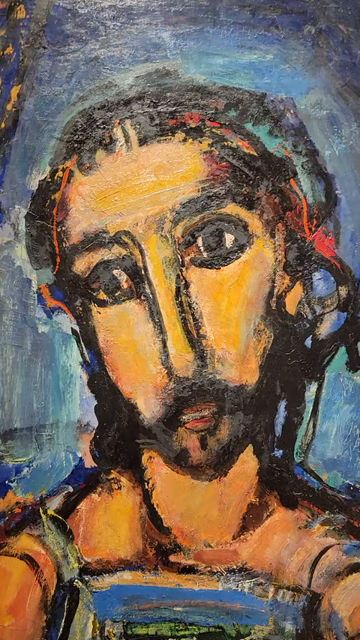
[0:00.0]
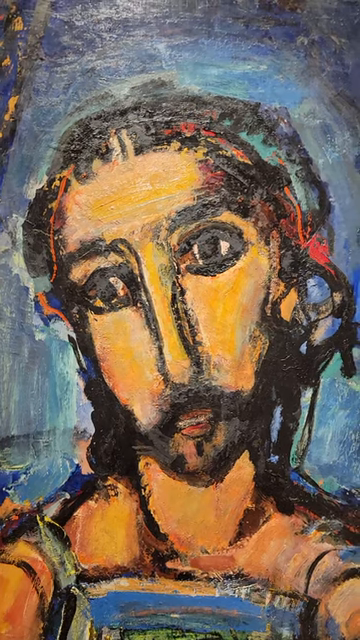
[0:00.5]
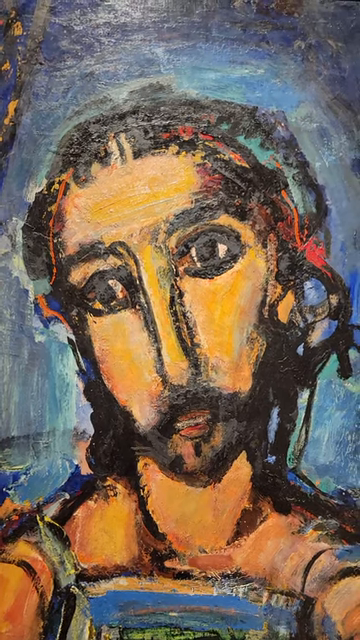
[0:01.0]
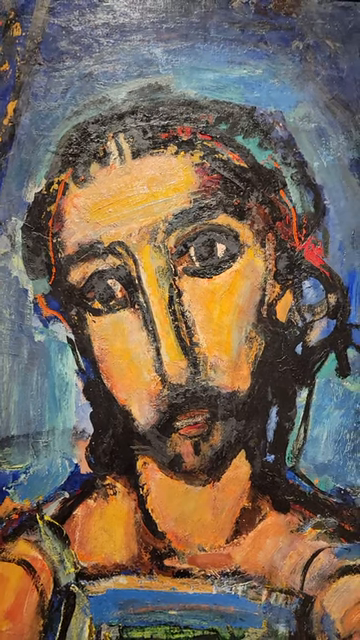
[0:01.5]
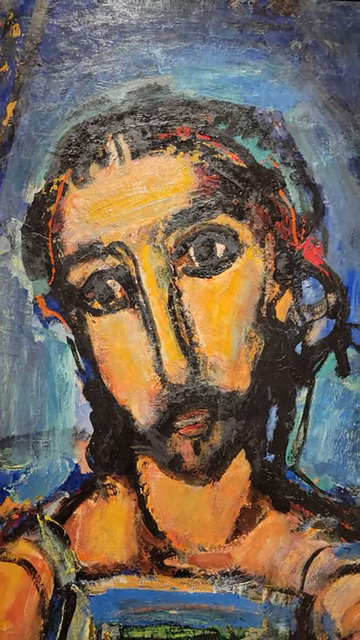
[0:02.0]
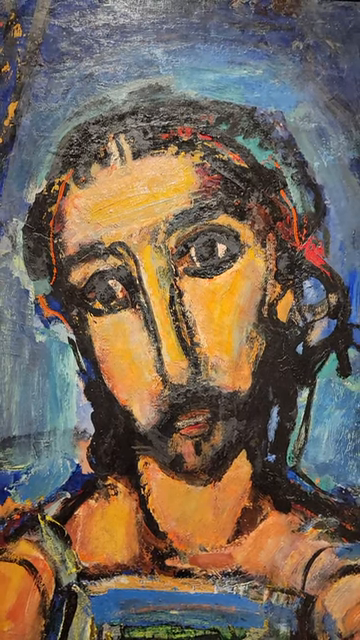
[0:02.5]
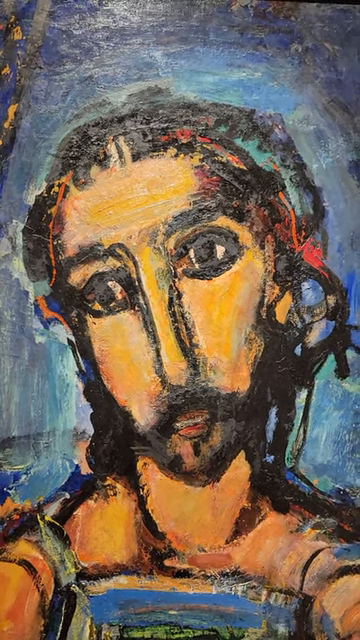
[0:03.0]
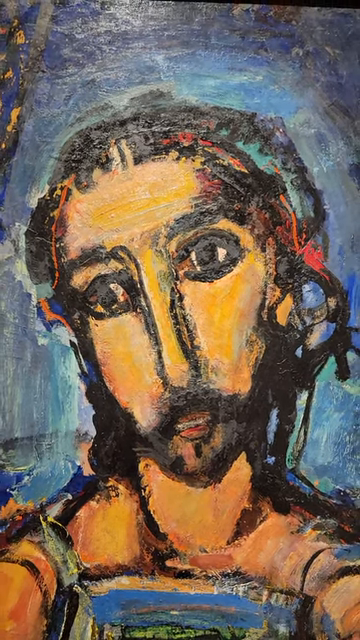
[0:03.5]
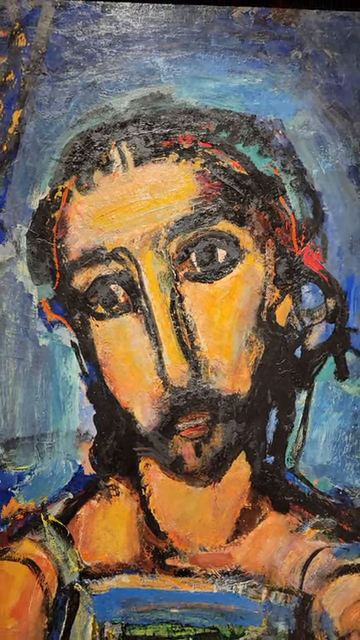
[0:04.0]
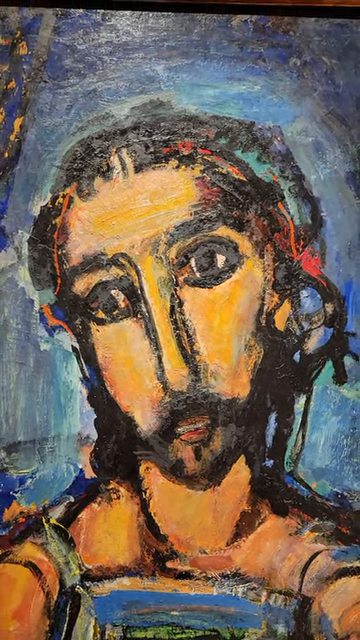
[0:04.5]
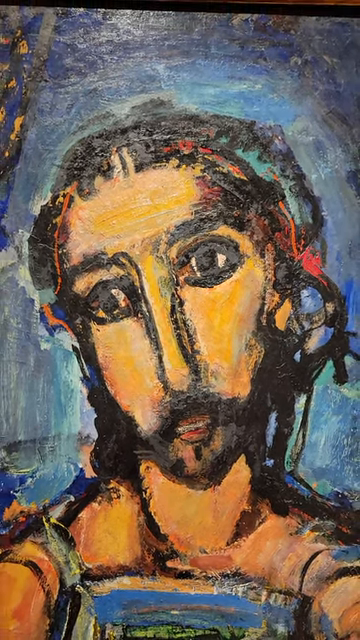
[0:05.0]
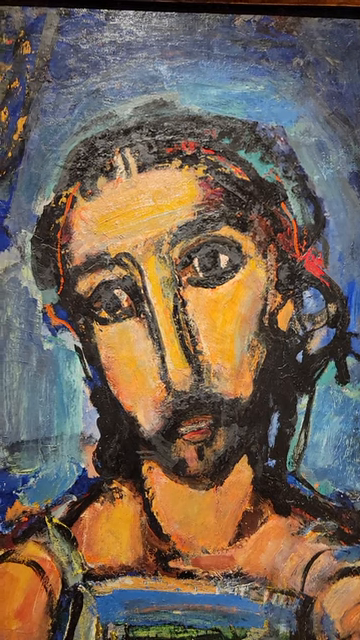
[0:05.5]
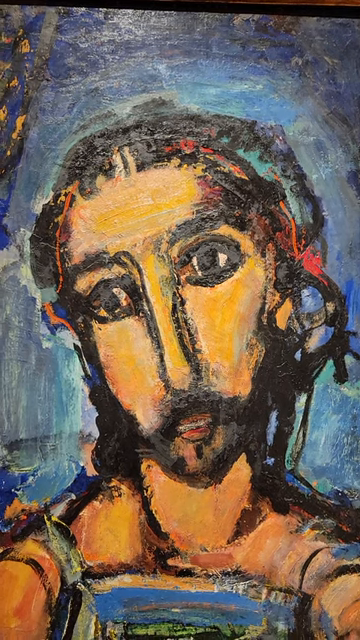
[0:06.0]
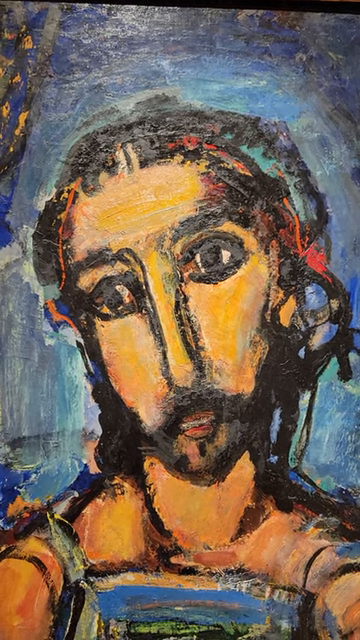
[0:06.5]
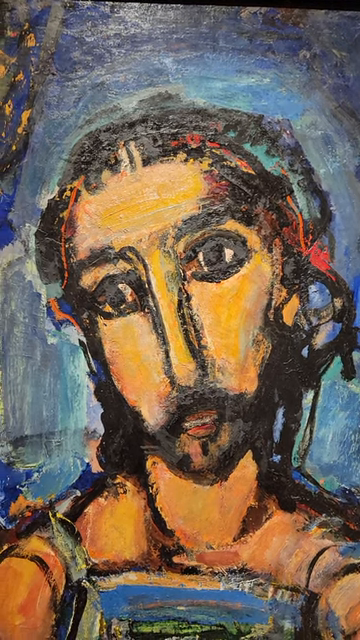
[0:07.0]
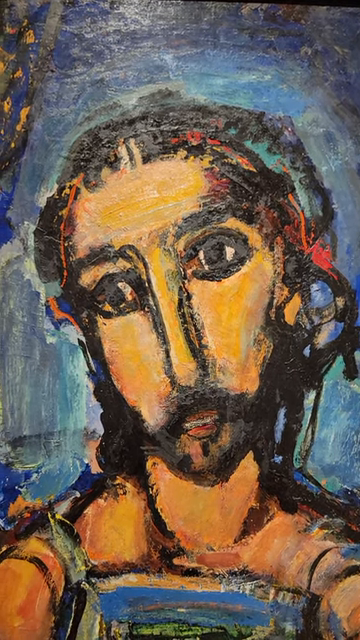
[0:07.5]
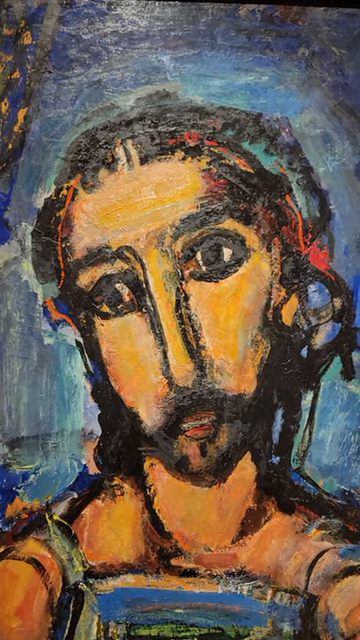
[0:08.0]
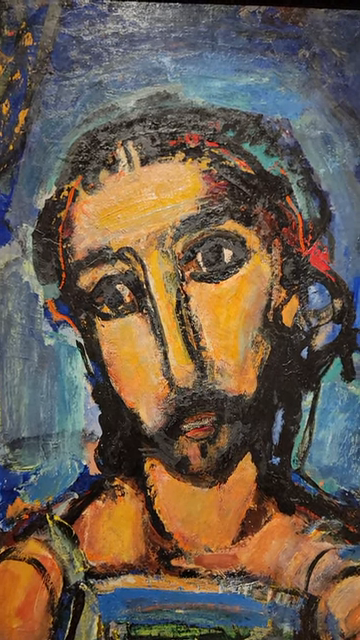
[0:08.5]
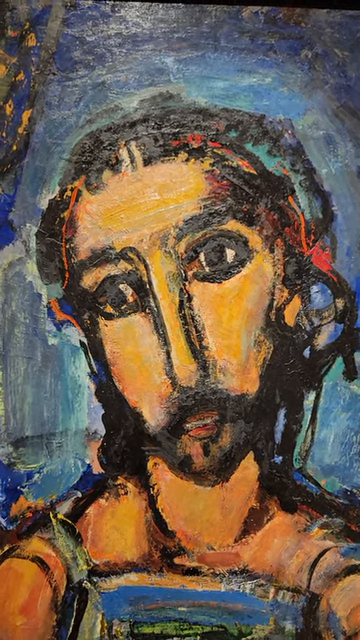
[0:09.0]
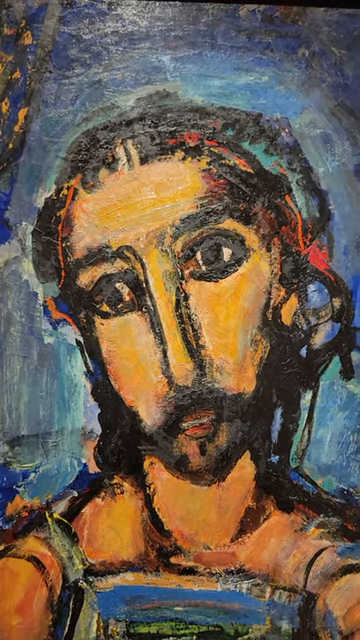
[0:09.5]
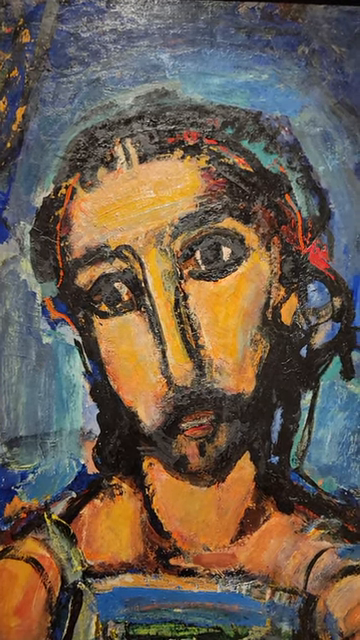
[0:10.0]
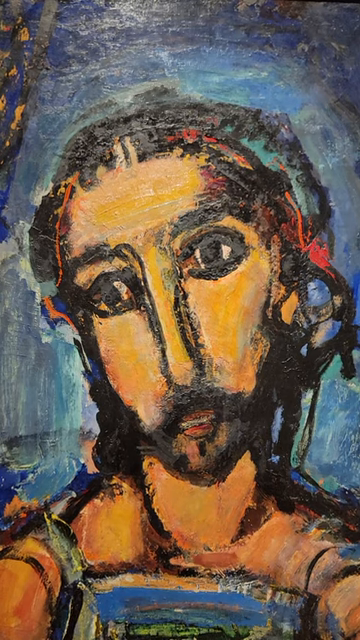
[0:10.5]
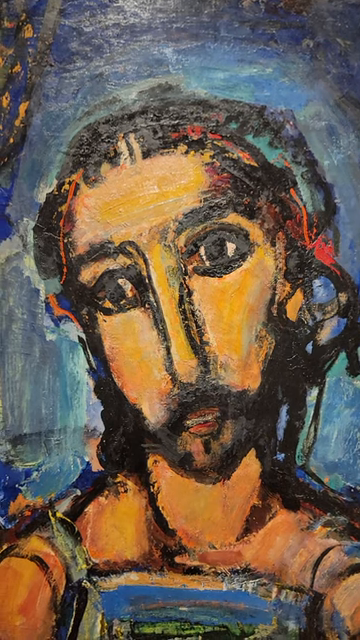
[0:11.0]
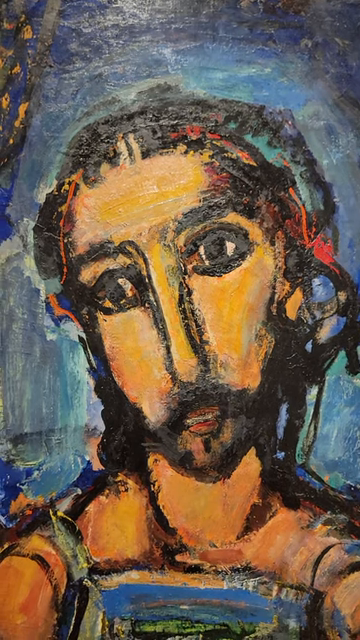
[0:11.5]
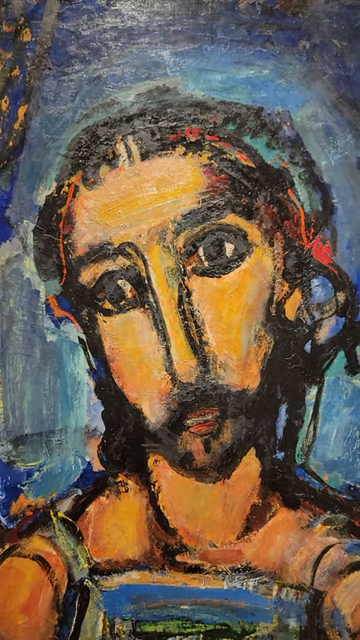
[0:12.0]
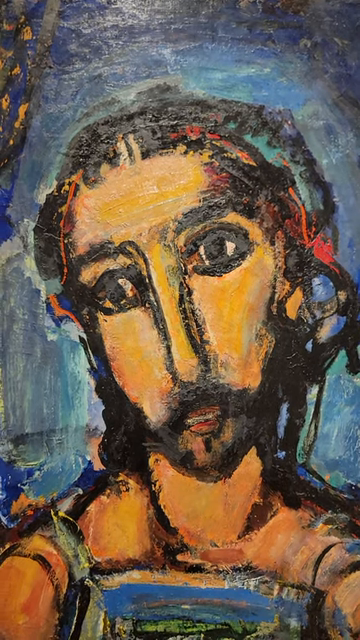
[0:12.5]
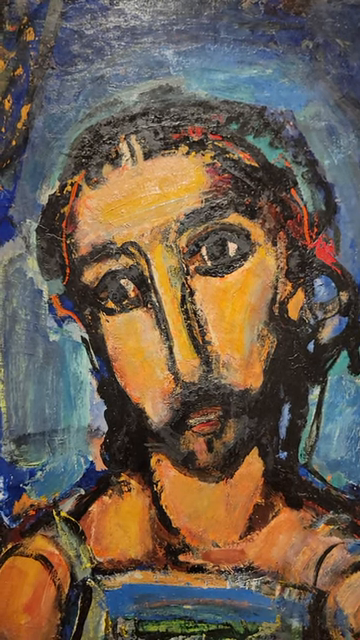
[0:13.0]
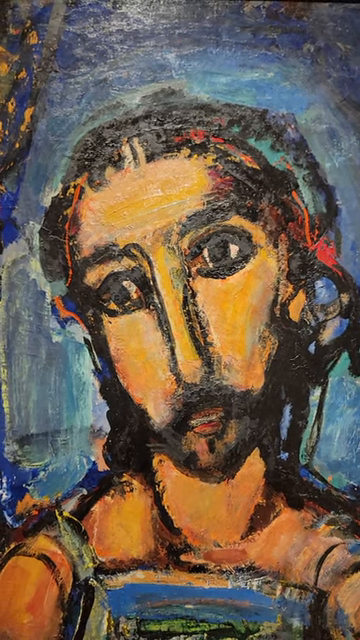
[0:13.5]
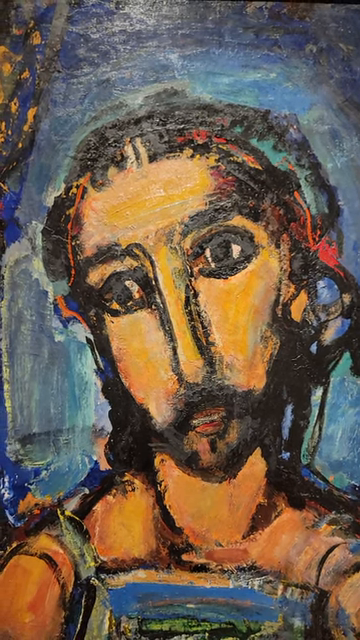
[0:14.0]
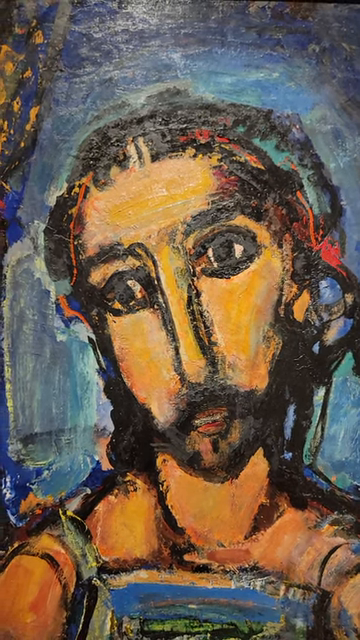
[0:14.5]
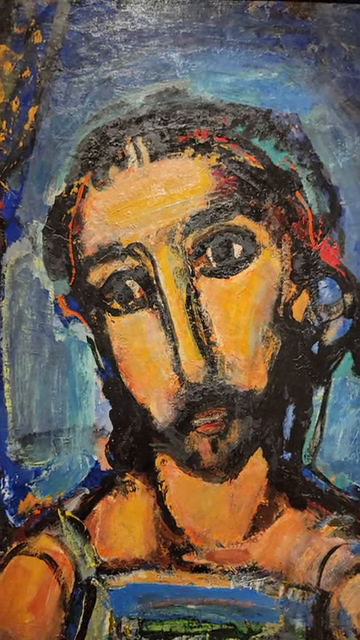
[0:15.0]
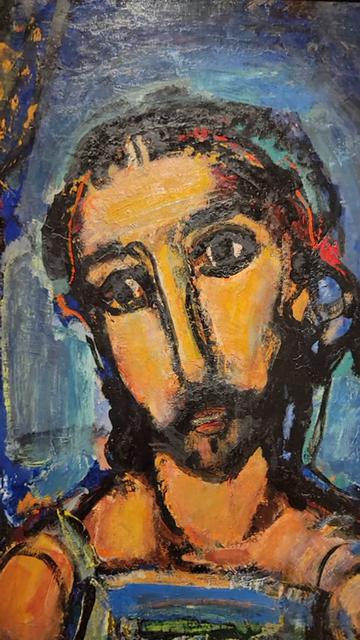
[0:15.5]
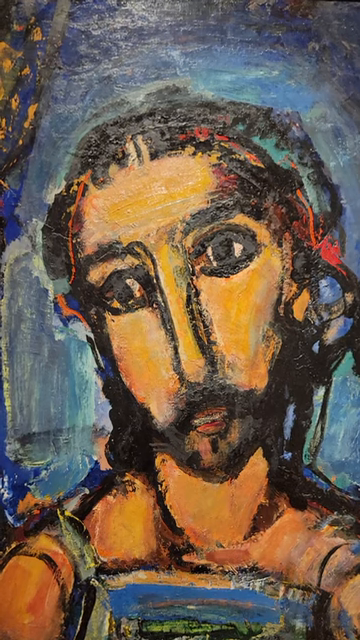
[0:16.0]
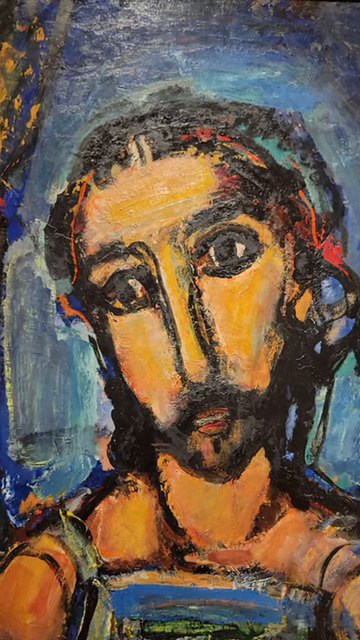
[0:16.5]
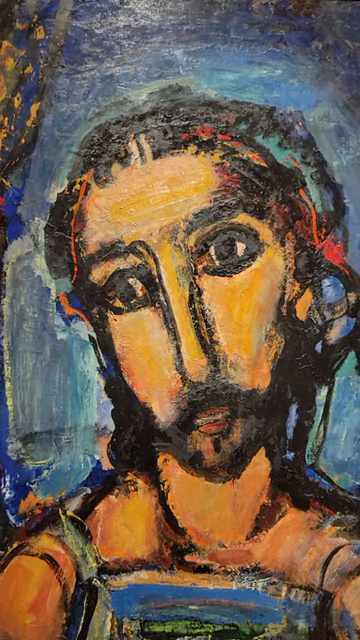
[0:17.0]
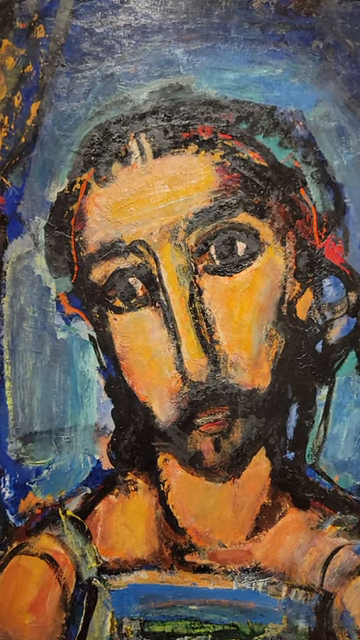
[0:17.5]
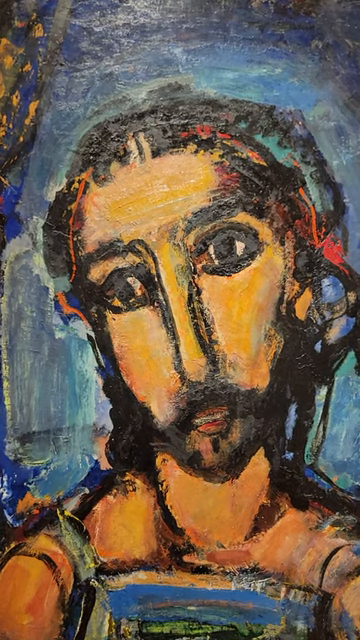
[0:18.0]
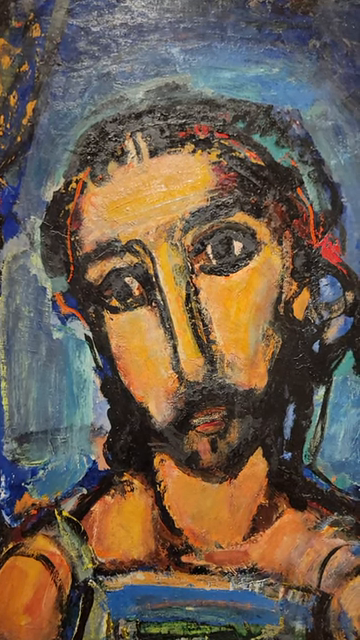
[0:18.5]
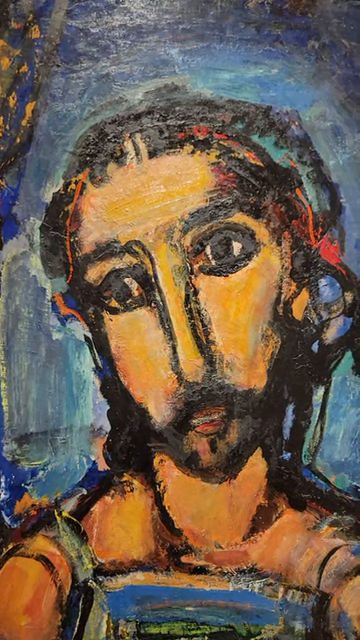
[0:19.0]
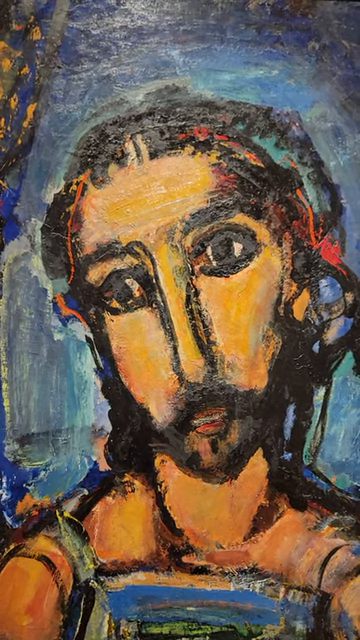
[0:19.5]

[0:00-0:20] A close-up shot shows a painting of a white man. He appears very similar physically to how Jesus is often depicted in European paintings, though this seems to be a more modern version of Jesus. He seems to have black dreadlocks mixed with some red dreadlocks. Jesus has a very long nose and a goatee, and the background of the painting is blue. The figure has very large black eyes with what looks like black eyeliner surrounding them, large black pupils and a large black iris. The mouth is very small, with very tiny teeth. The person is seen only from the neck up; the neck is very short compared to the head, about one-fourth the length of the head, and the shoulders can just be made out. The figure does not appear to be wearing any clothes.